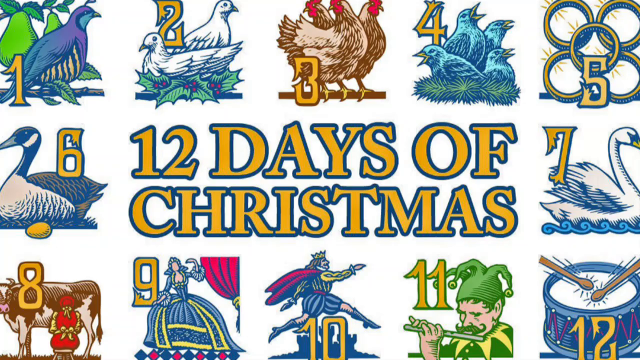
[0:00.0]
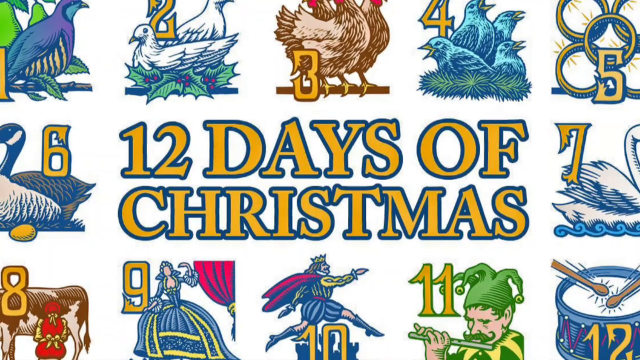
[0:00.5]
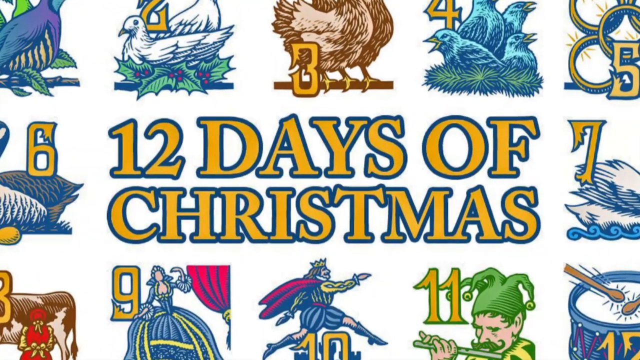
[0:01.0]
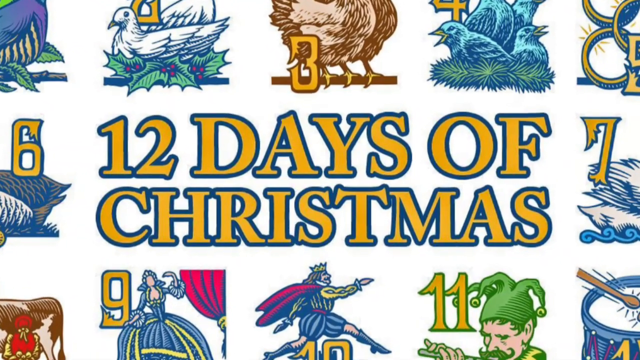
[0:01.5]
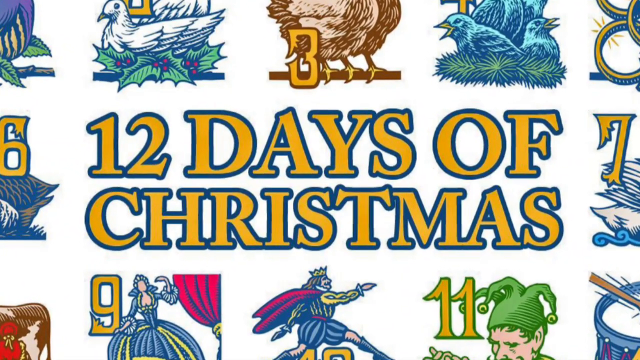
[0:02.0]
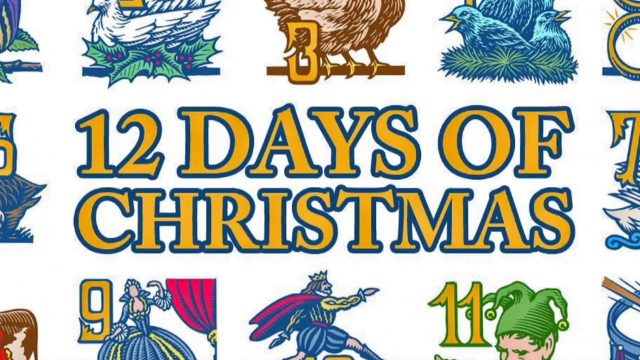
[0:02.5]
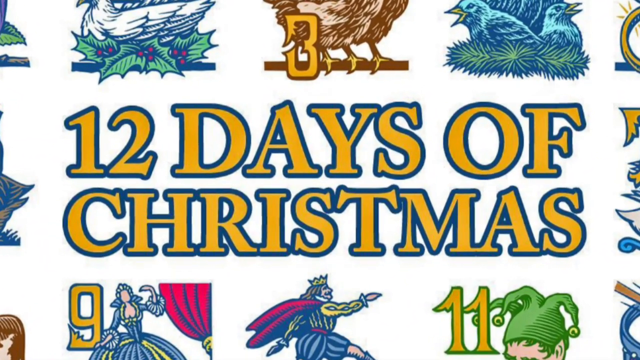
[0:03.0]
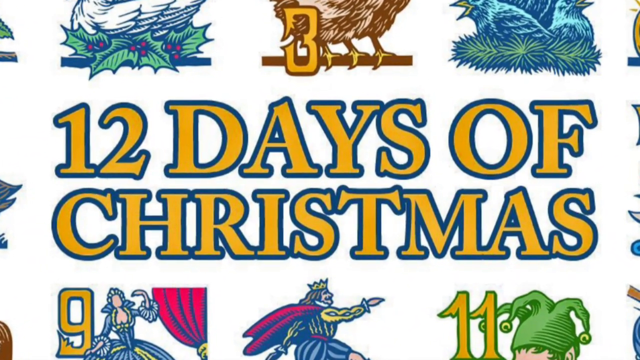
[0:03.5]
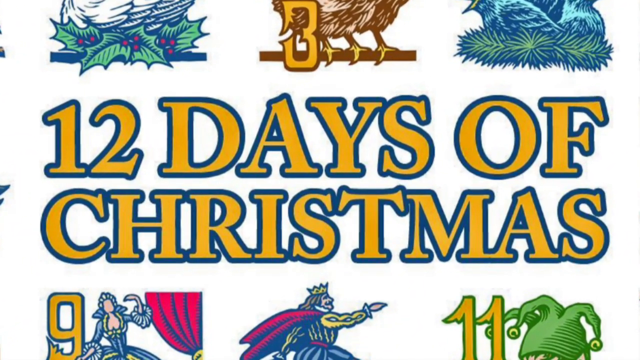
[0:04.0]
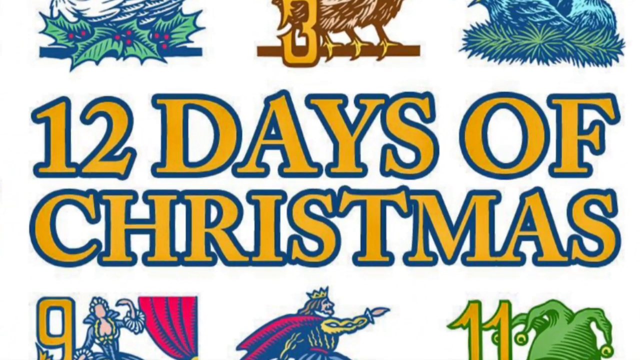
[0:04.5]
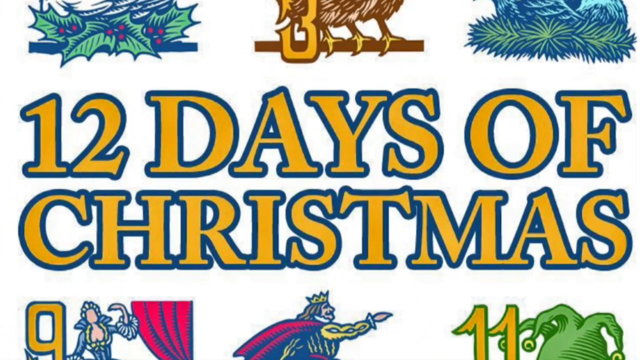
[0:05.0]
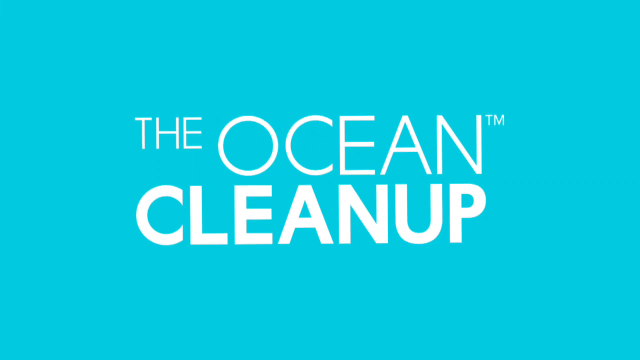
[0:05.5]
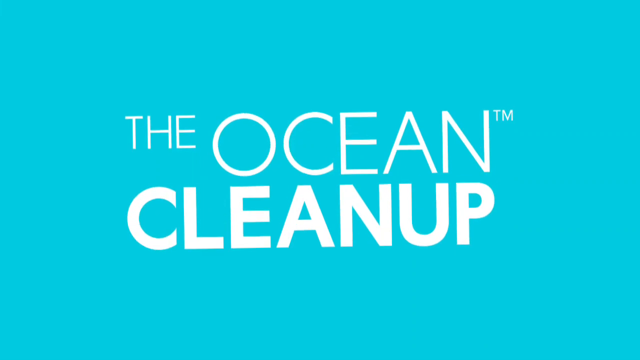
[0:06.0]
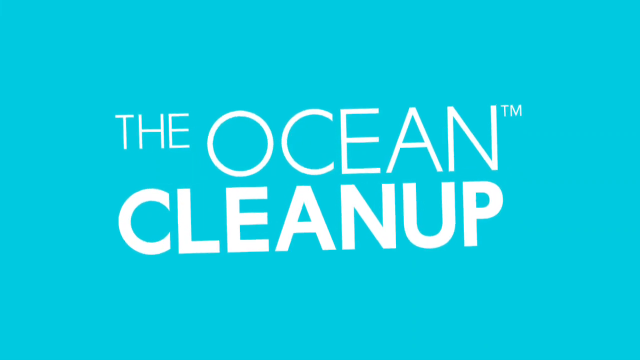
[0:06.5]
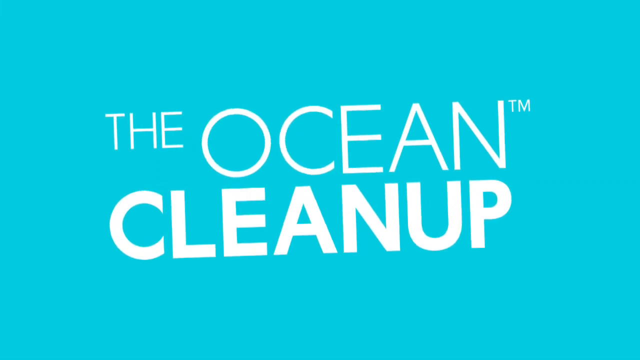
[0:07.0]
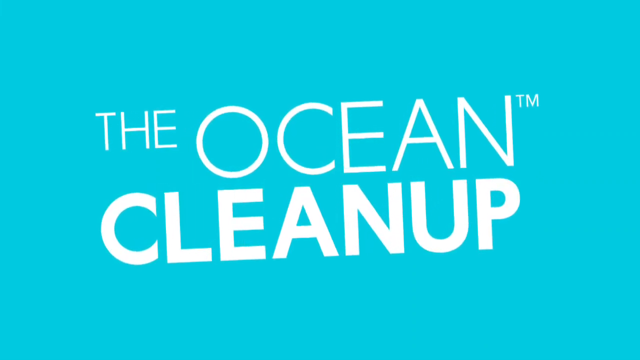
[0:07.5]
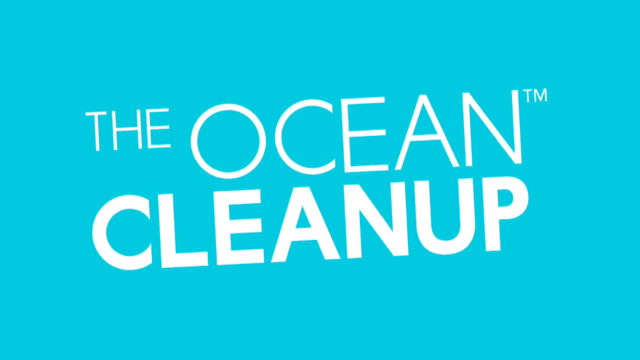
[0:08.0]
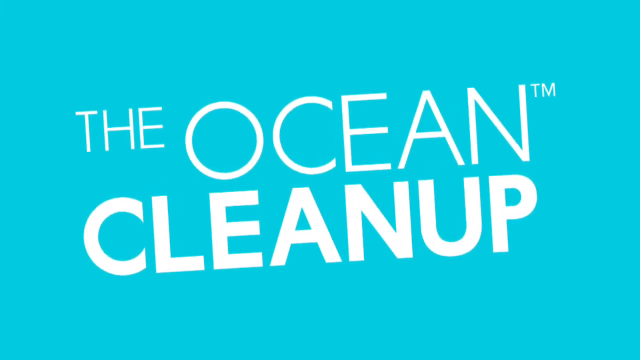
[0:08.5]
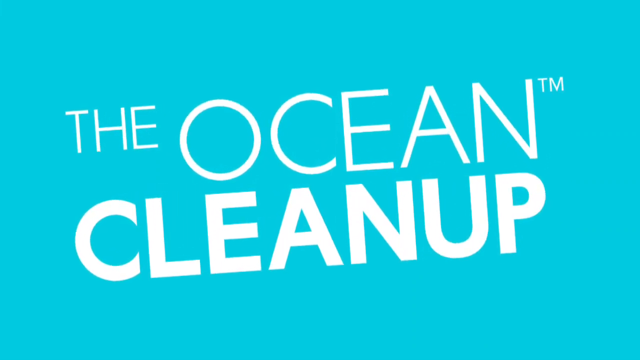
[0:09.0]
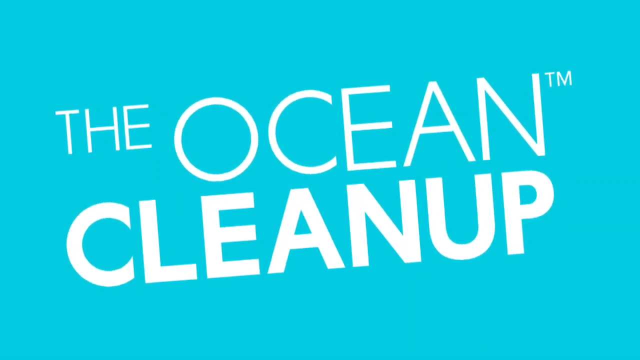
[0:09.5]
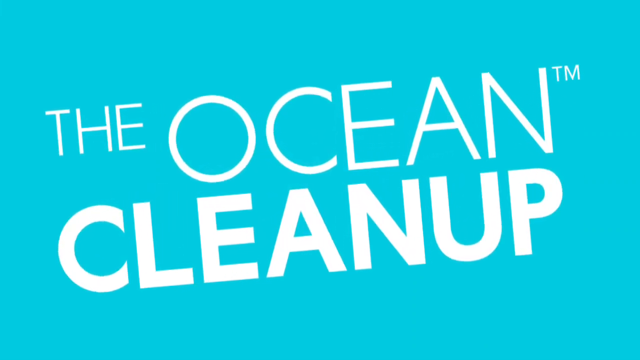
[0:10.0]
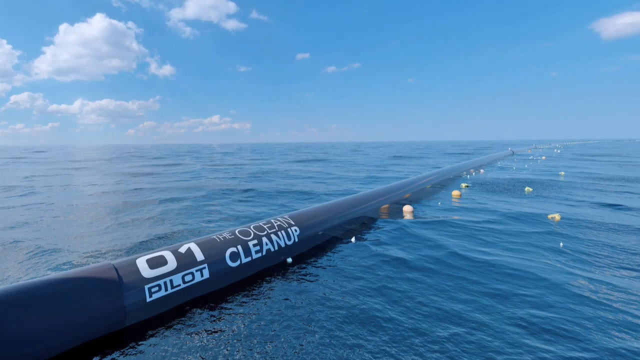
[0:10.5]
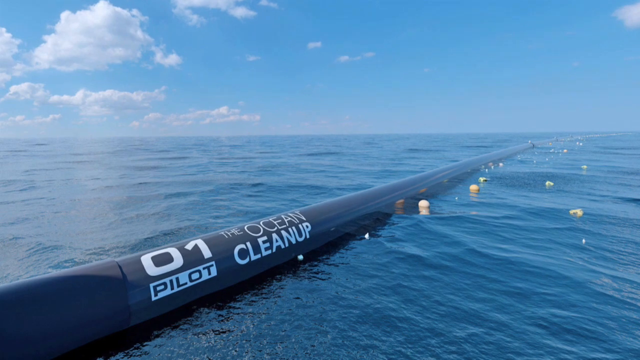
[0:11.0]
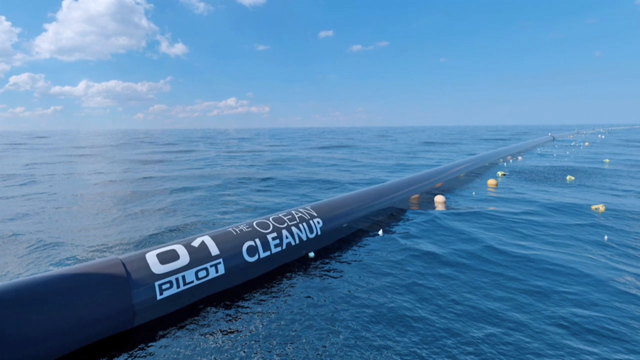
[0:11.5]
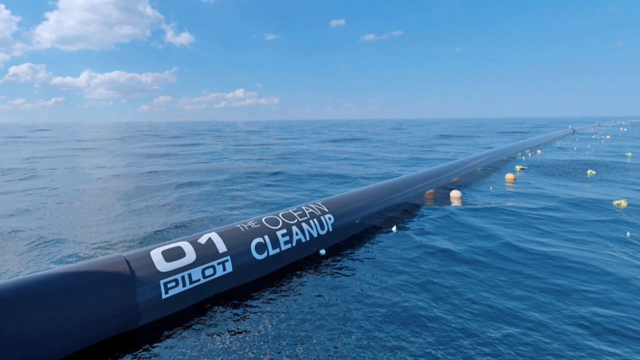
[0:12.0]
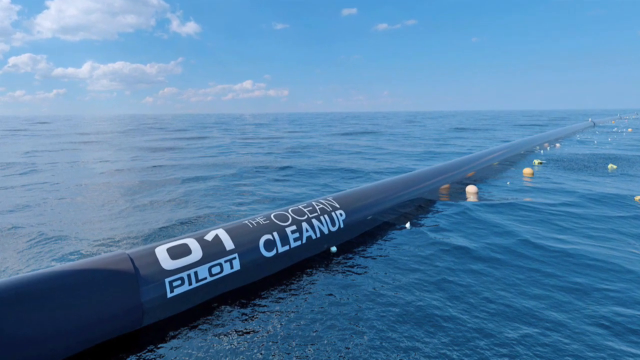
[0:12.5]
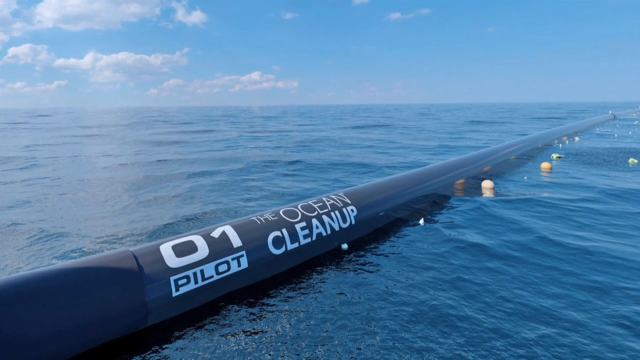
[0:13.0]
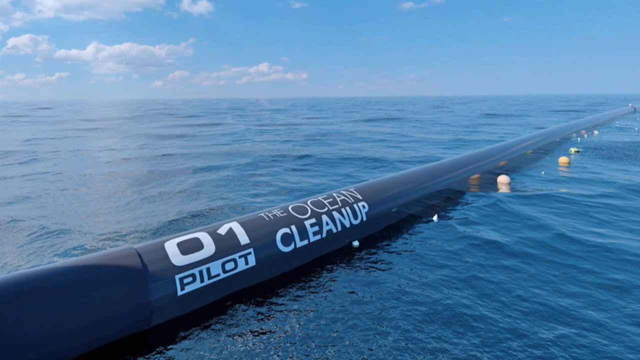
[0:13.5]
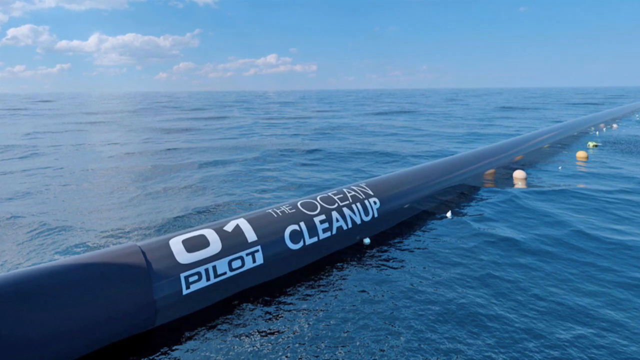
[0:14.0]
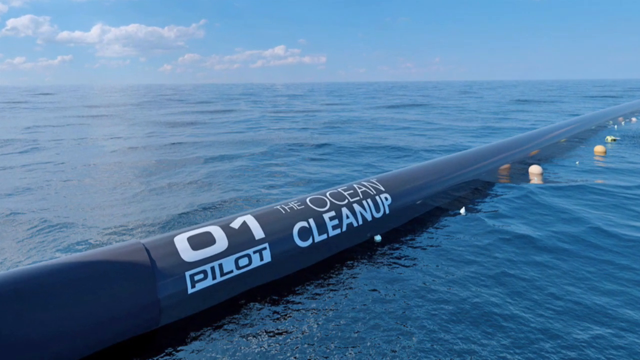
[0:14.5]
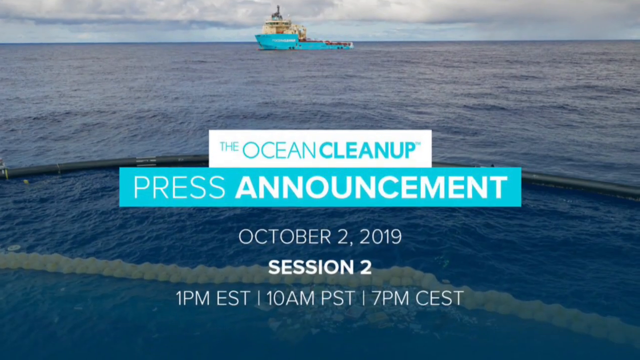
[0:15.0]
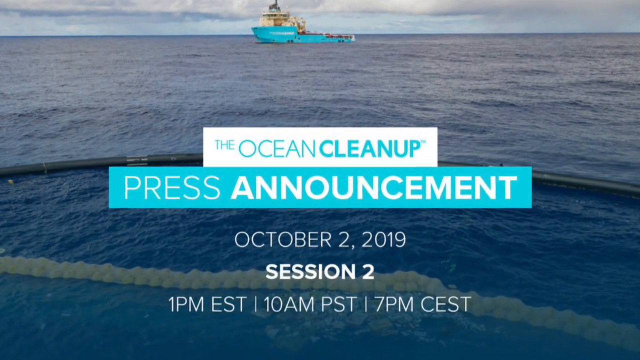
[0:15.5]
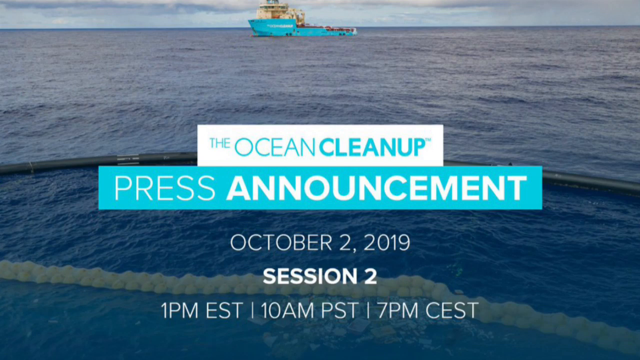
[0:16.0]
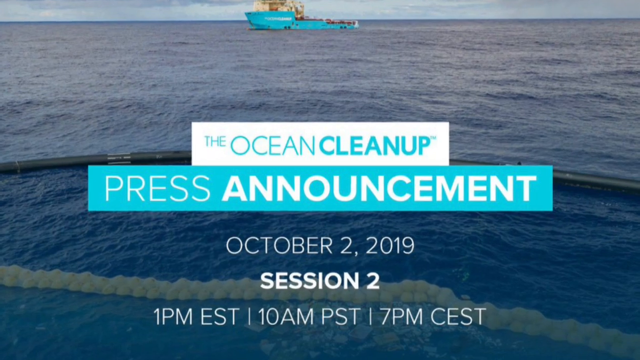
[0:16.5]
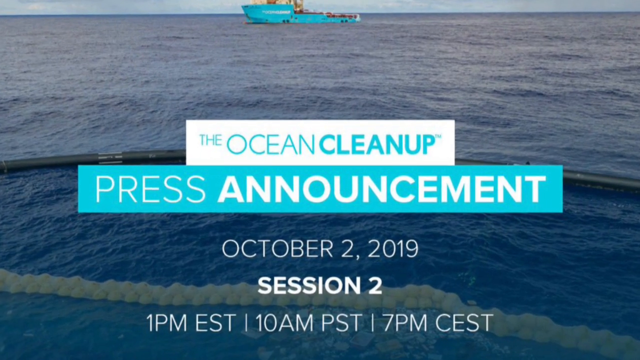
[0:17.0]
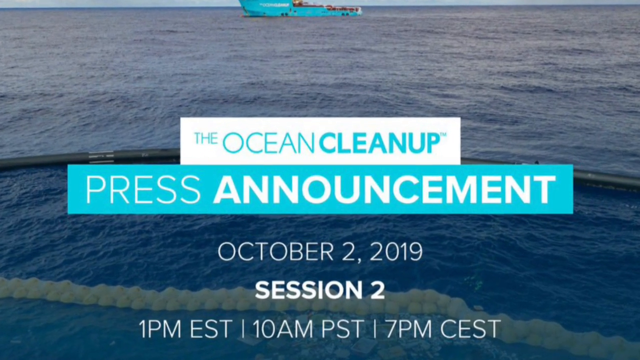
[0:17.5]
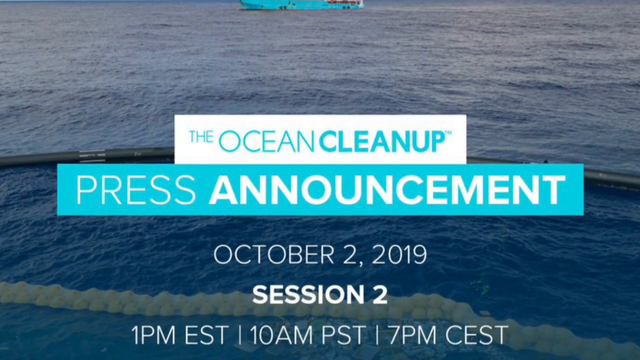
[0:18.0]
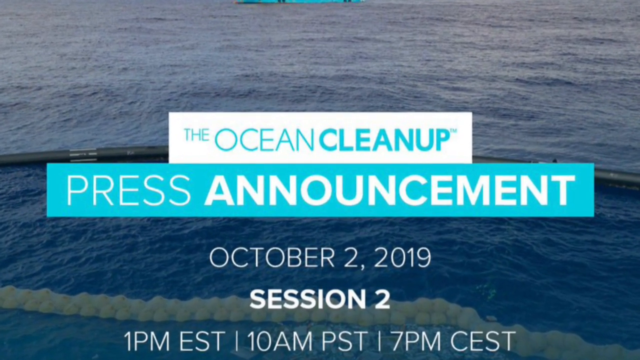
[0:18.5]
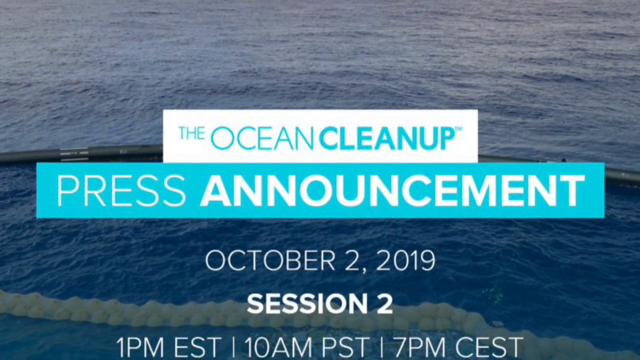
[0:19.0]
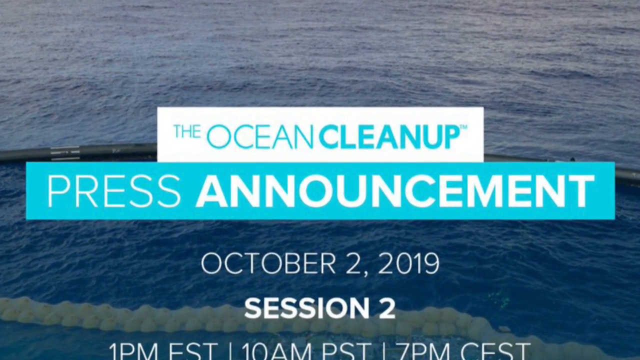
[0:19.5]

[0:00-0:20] The video begins with "the 12 days of Christmas" written in the middle of the screen in yellow with a blue outline. On the first row there is a blue partridge with two pears behind it, representing the partridge in the pear tree. Next on the first row are two turtle doves, one facing left and the one in the back facing right. Then come three French hens, which are white and tan, followed by four geese, which are blue and have their beaks open. The last item on the first row, on the right side, is the five golden rings: two rings on top, two on the bottom and one in the middle. On the second row are six geese a-laying; the goose faces the left side of the screen, is blue and white, and has a golden egg under him. The next item on this row is a swan, facing right, white and blue, and appearing to float on water. The video then shows a closer view of the 12 days of Christmas. The screen changes to a turquoise background with a gradient that turns black toward the bottom, with the words "the ocean cleanup" written in white. Next, the ocean cleanup is shown out in the ocean, with "one pilot" written on the tube in the middle of the water. The water is crisp and blue, with visible waves. Another view of the water follows, with a turquoise tugboat in the background. Toward the front, "the ocean cleanup" is written in blue on a white rectangle, and underneath it "press announcement" is written in white on a turquoise background. The date October 2nd 2019 is also indicated.